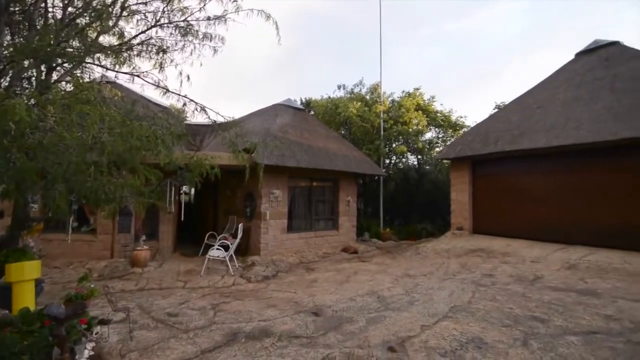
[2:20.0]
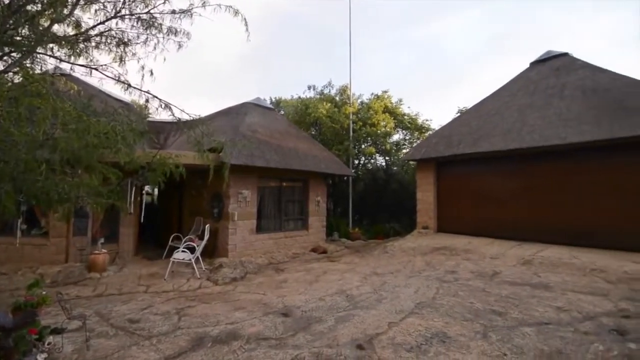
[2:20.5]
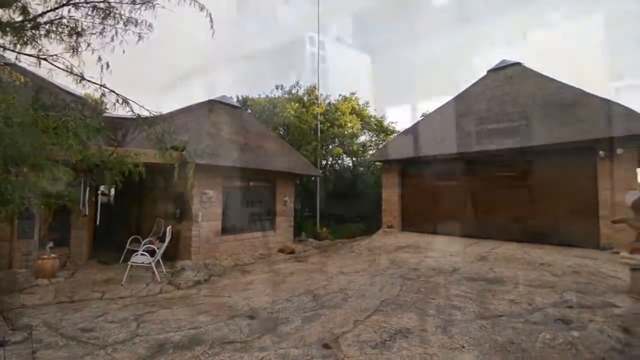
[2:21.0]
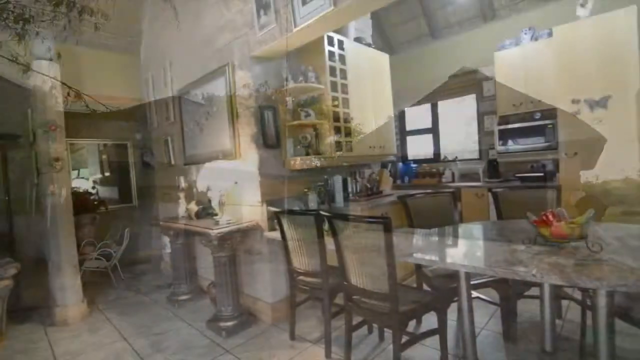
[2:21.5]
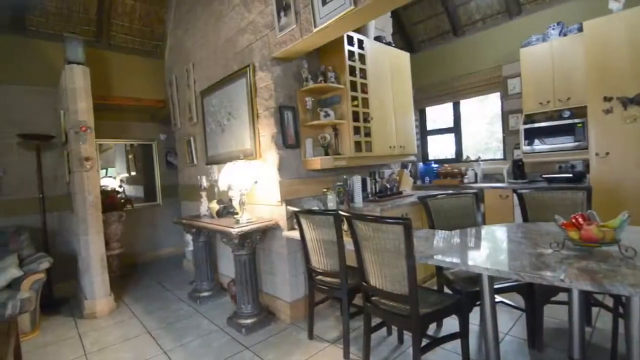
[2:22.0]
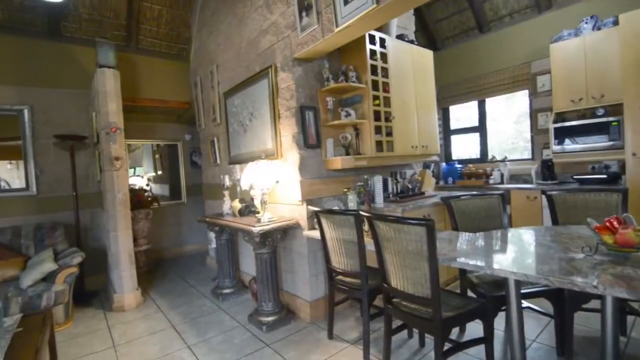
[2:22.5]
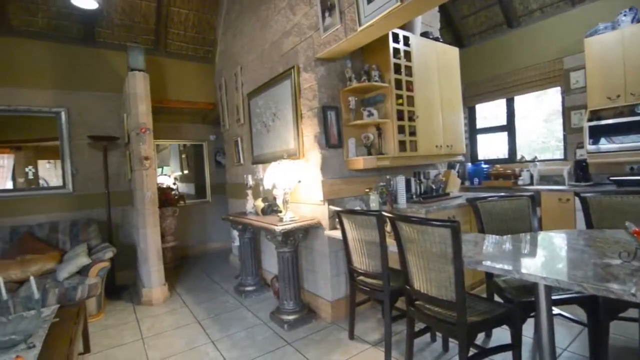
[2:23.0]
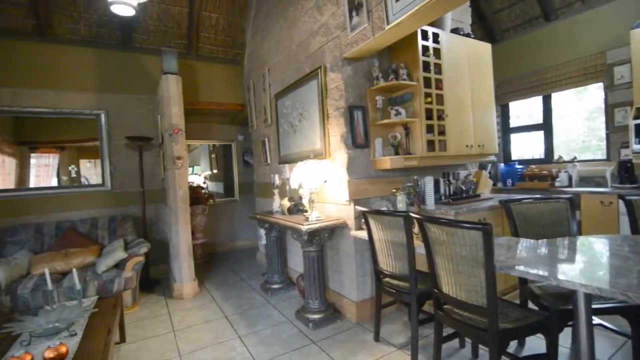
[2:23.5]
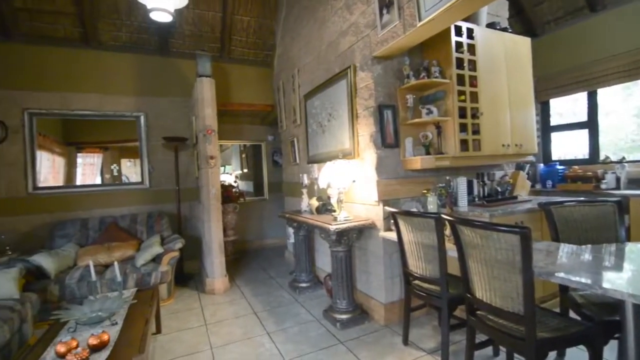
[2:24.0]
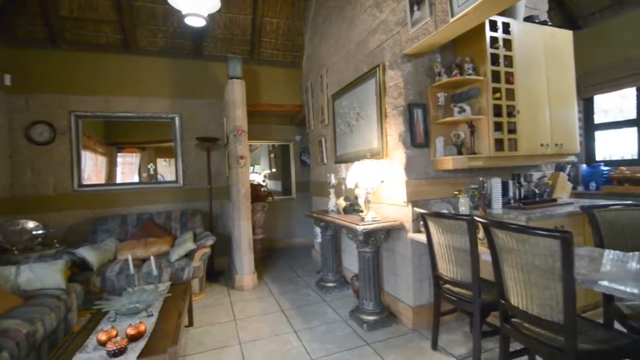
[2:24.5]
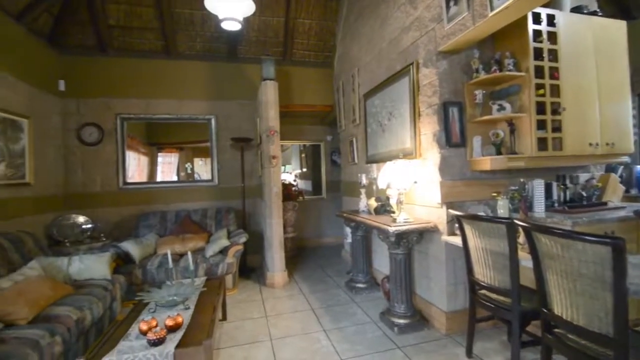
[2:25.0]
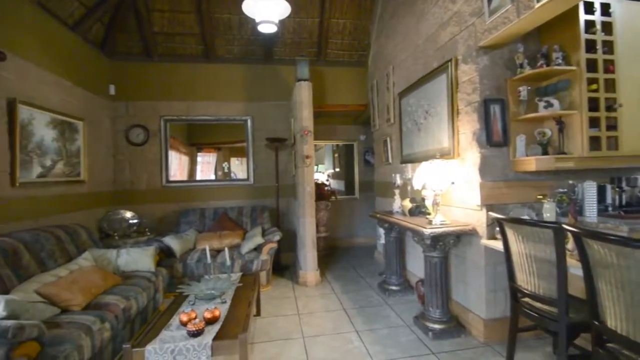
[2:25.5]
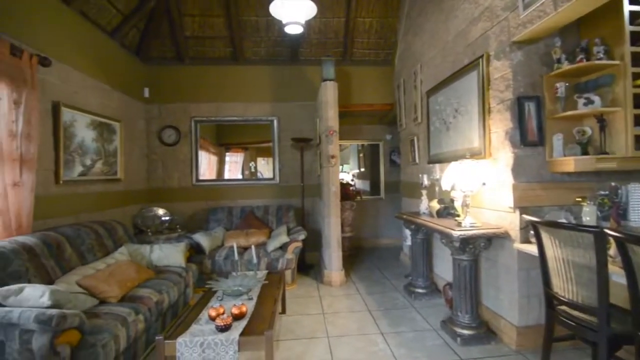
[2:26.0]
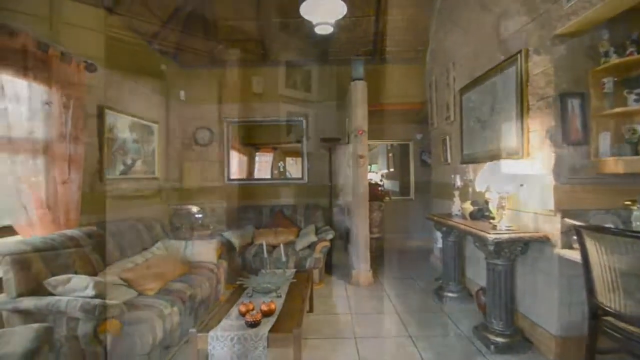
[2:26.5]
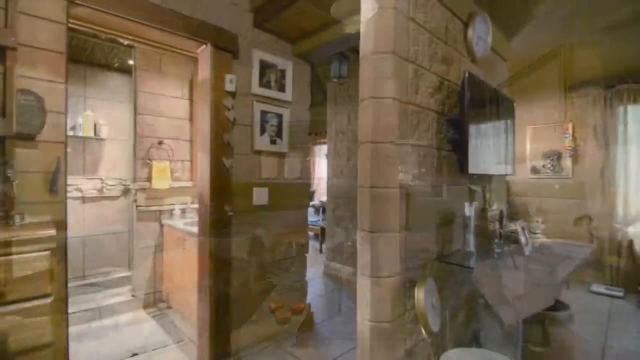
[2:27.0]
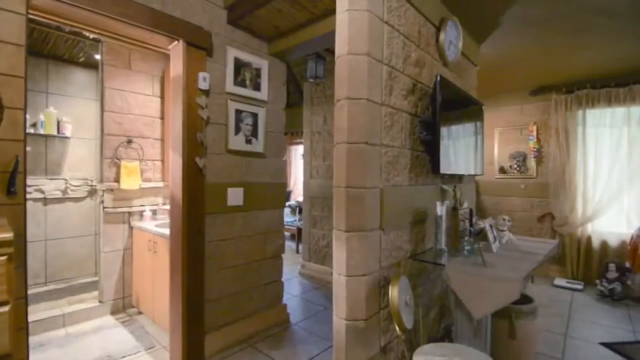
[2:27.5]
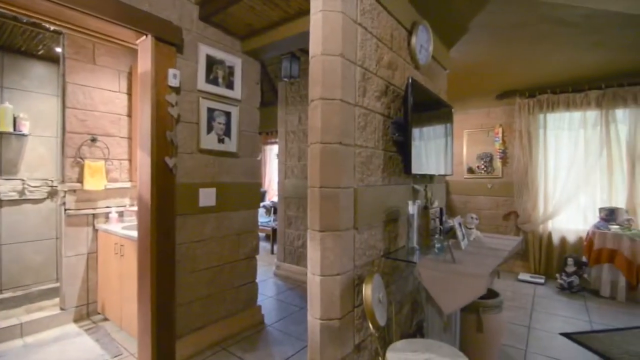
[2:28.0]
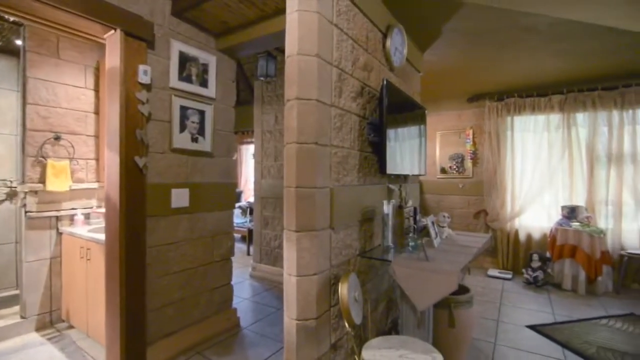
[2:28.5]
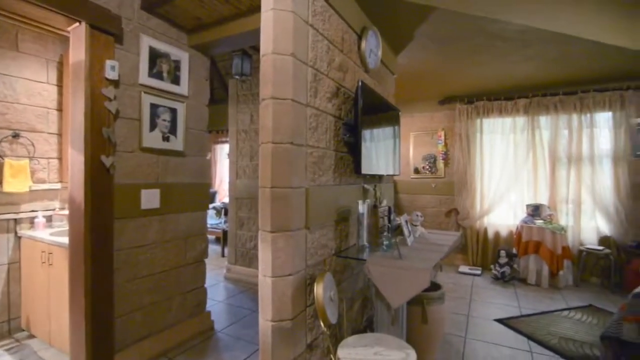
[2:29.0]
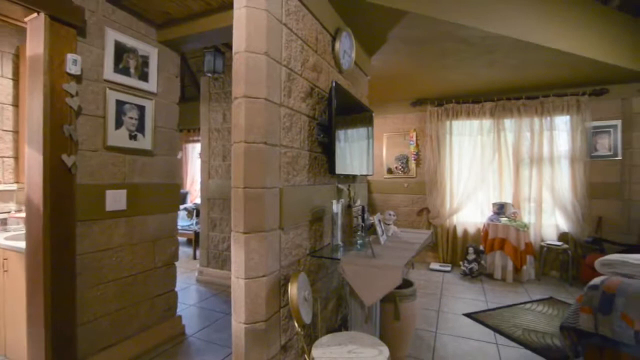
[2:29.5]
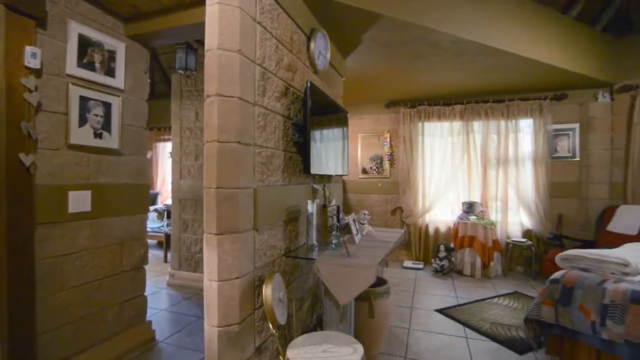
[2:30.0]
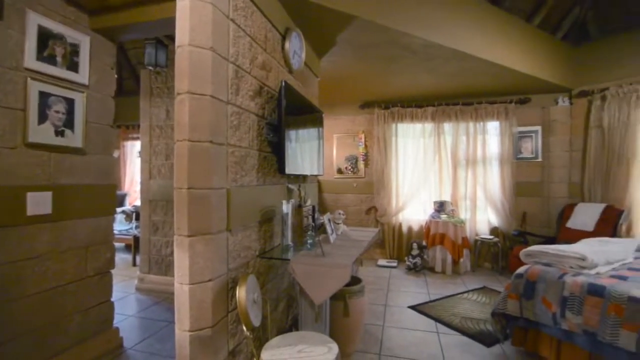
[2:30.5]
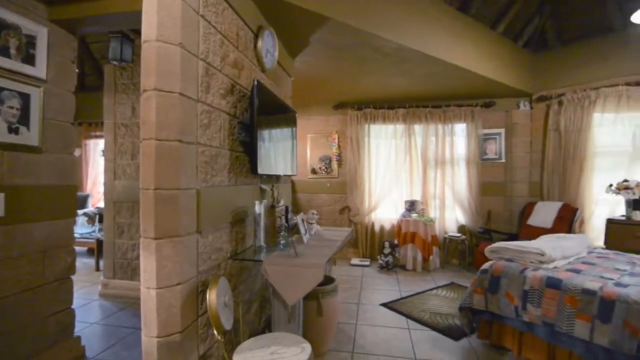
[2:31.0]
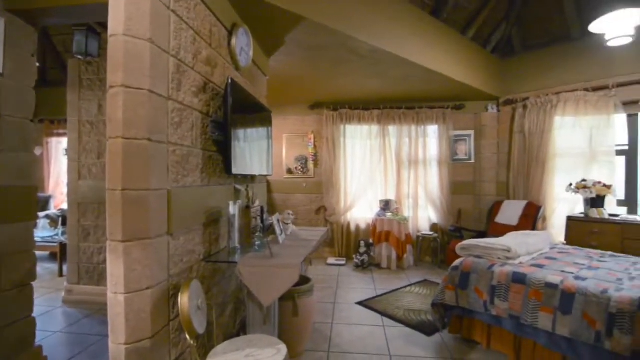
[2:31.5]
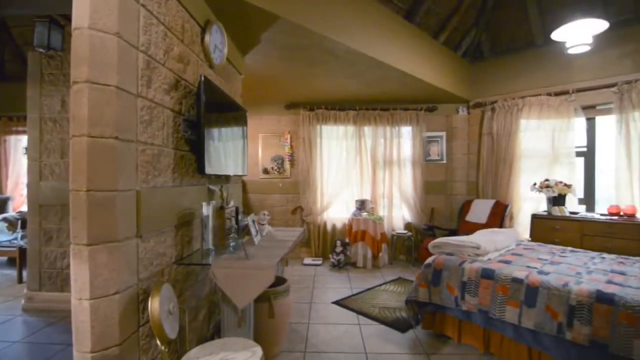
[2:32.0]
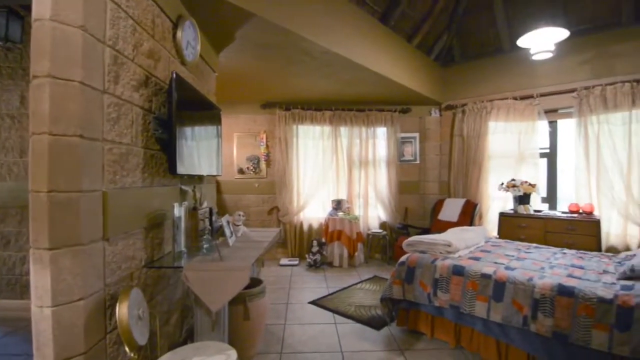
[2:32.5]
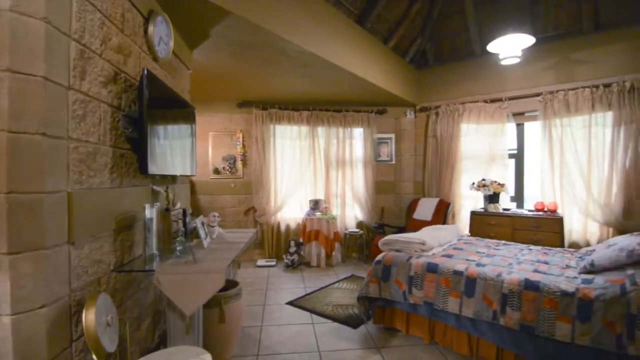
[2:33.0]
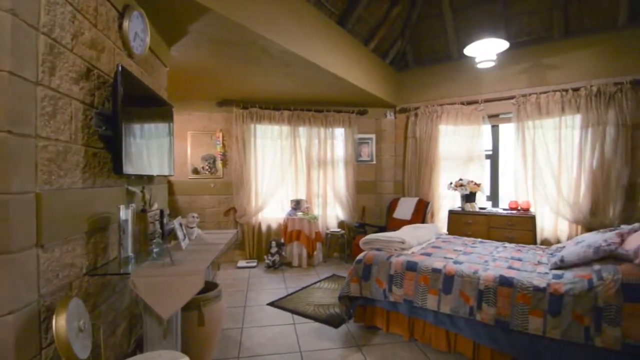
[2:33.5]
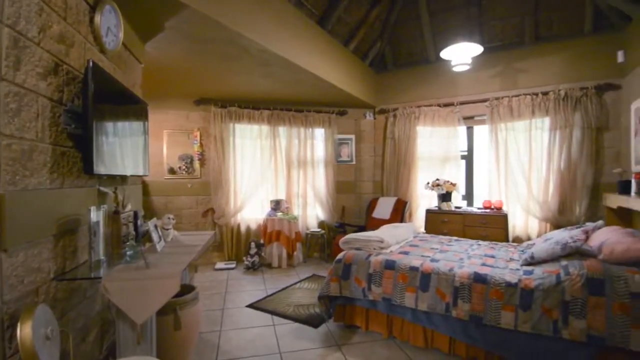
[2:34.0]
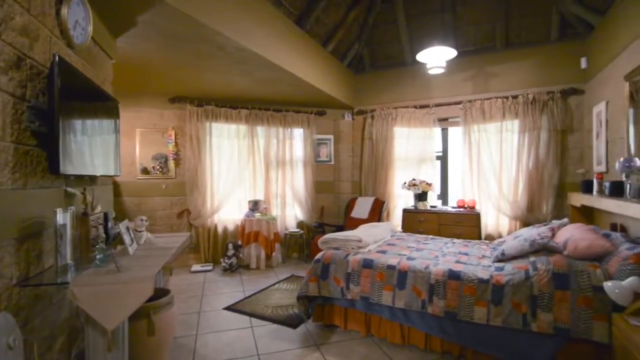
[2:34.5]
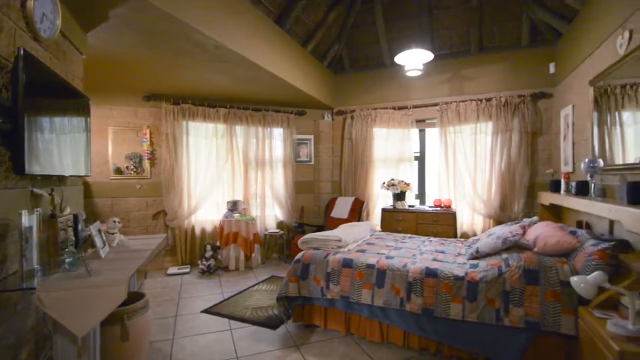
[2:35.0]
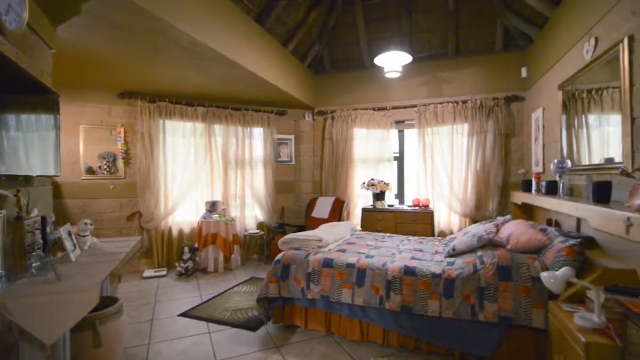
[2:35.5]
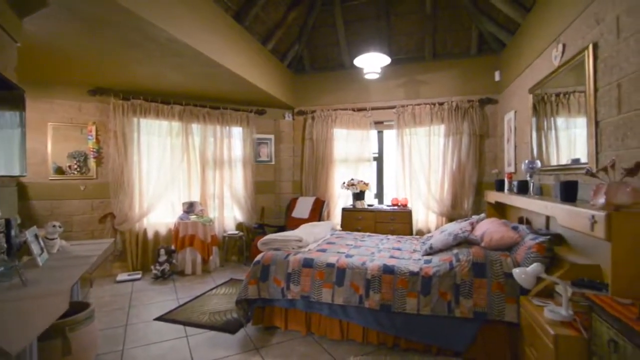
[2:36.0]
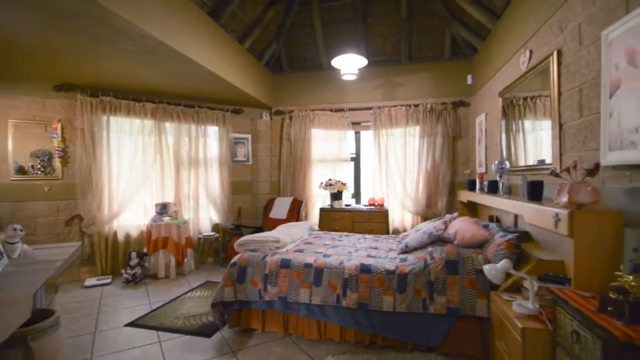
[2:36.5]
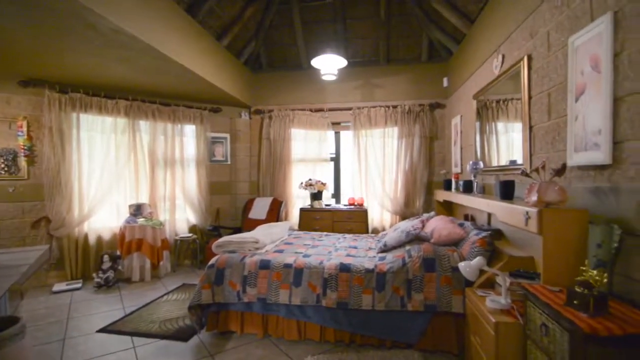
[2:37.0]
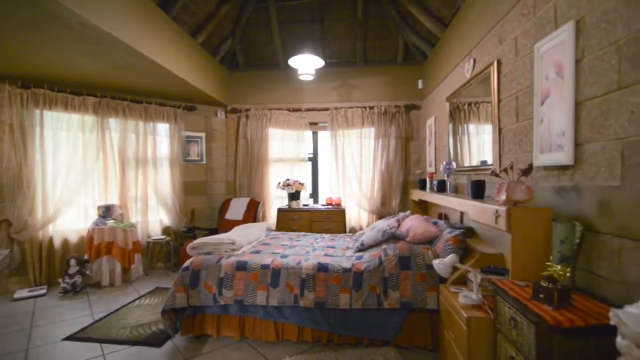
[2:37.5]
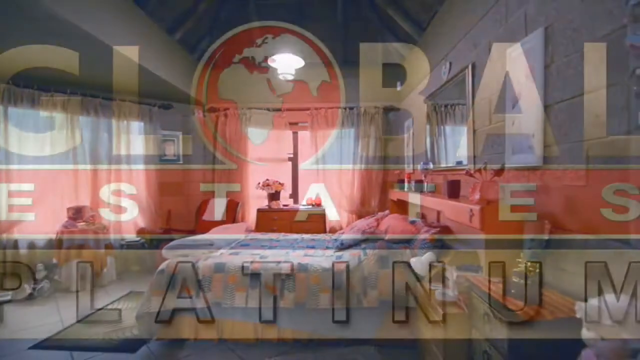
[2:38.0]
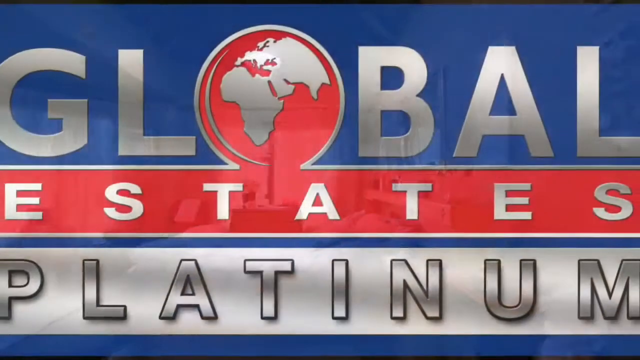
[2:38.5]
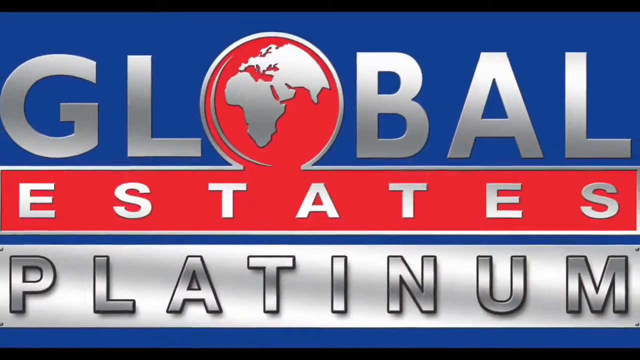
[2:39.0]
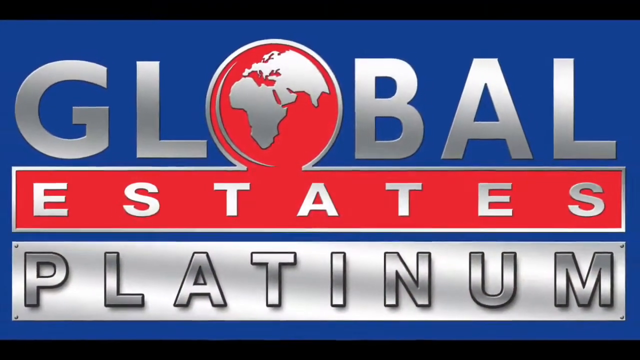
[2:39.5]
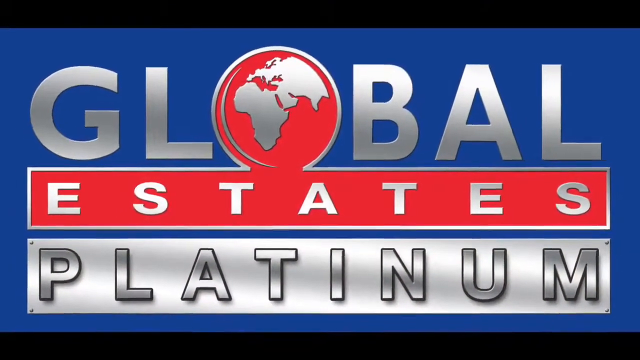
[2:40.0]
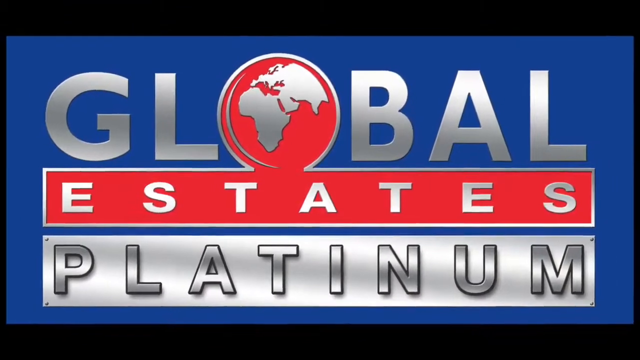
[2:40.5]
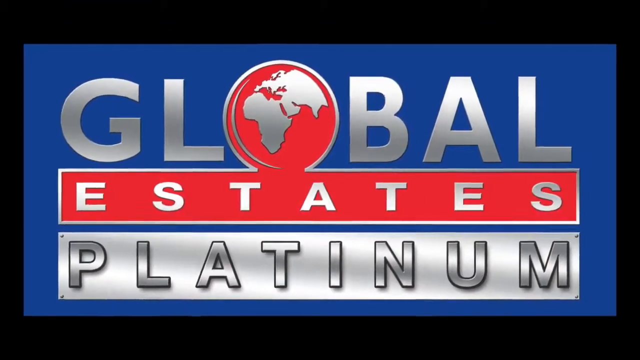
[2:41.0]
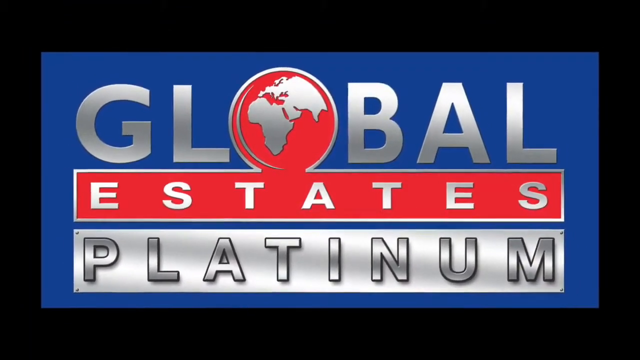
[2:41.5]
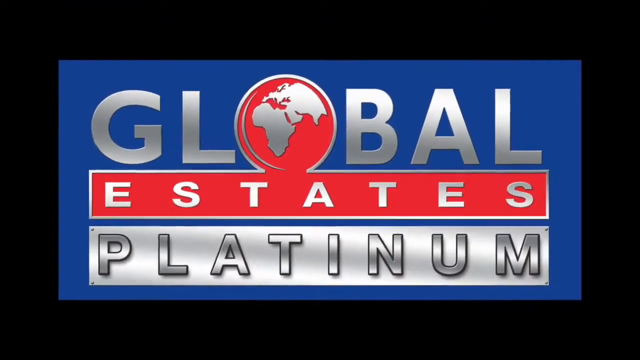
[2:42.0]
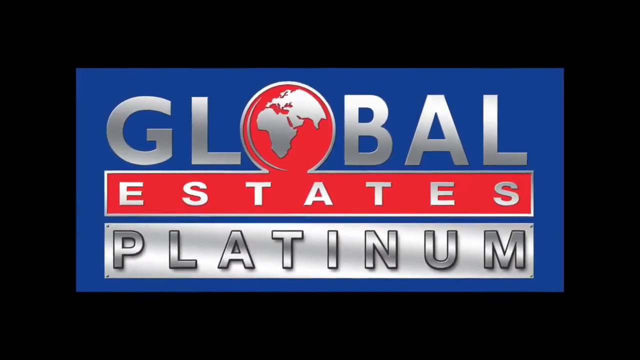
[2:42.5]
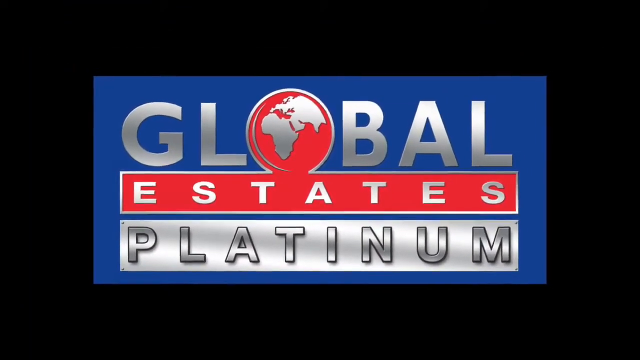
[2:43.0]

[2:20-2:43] The video shows the outside of a house, which is either under construction or something happened to it, and then goes inside. This house is open but very cluttered and heavily decorated, with drapes flowing on the windows. Then an advertisement for the business appears. Inside the house there are pictures all over, a clock above a TV, lights on, small tables draped with linens, pillows everywhere, a blanket folded on the bed, and mirrors by pictures. Then "Global Estates Platinum" appears, apparently the real estate company handling the house. The outside looks either like it is being built or like something such as a storm came through, with no grass, only dirt that looks kind of washed up.